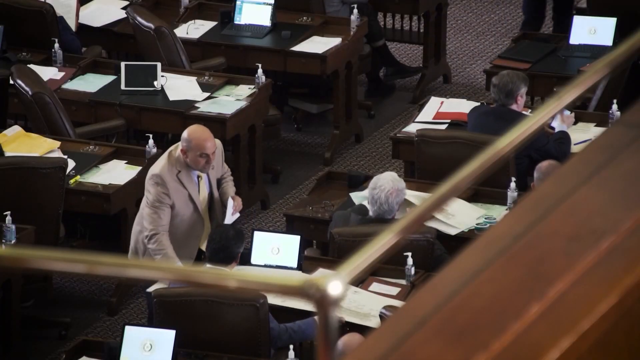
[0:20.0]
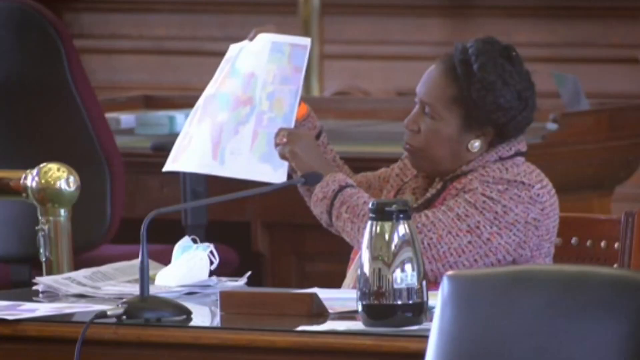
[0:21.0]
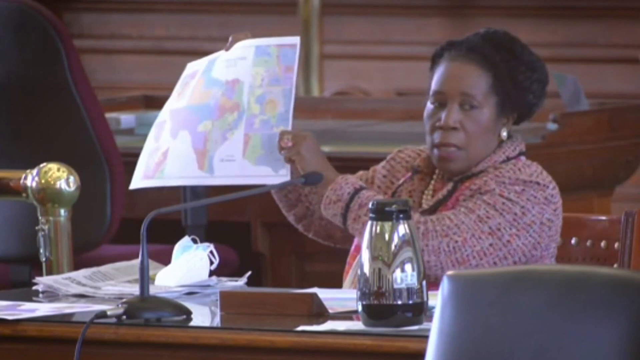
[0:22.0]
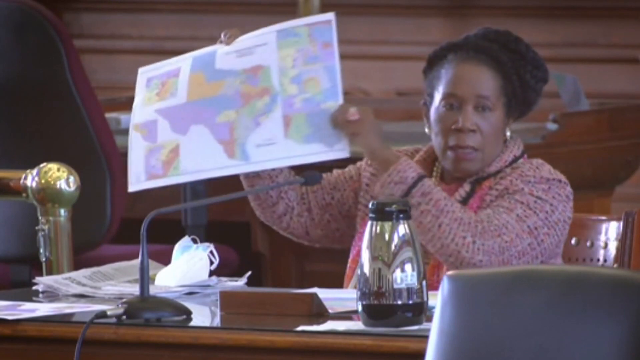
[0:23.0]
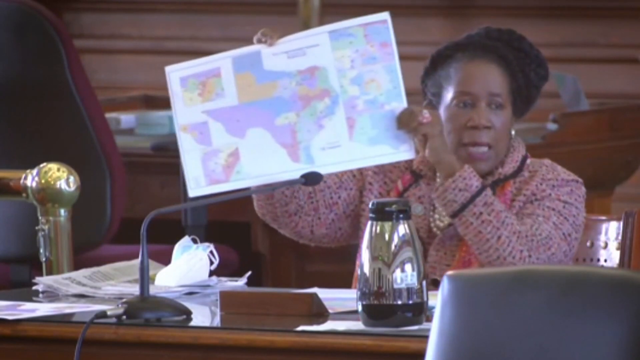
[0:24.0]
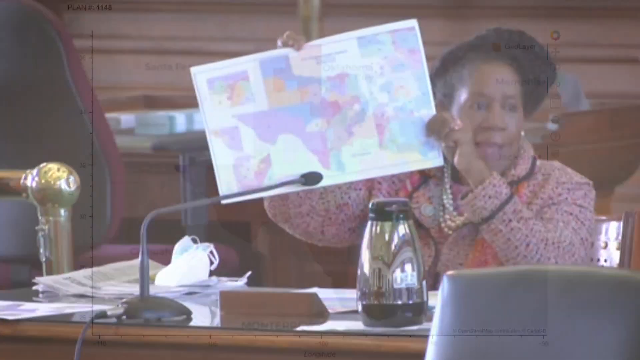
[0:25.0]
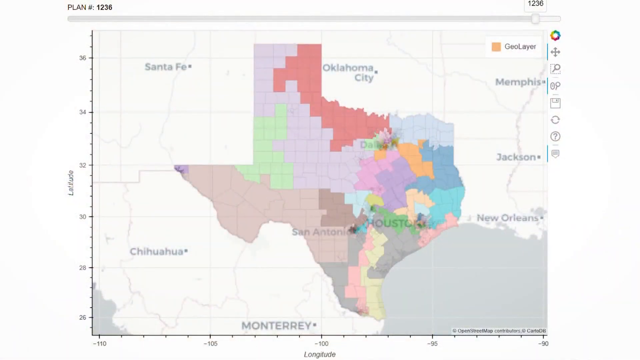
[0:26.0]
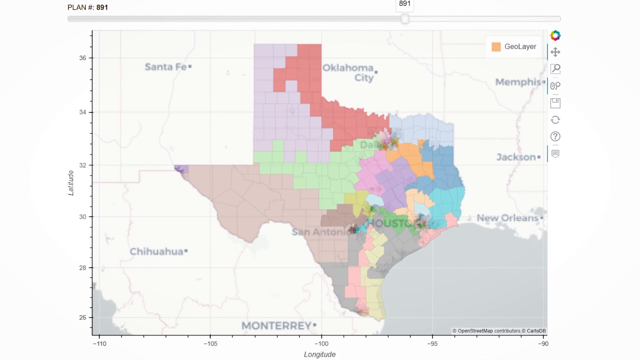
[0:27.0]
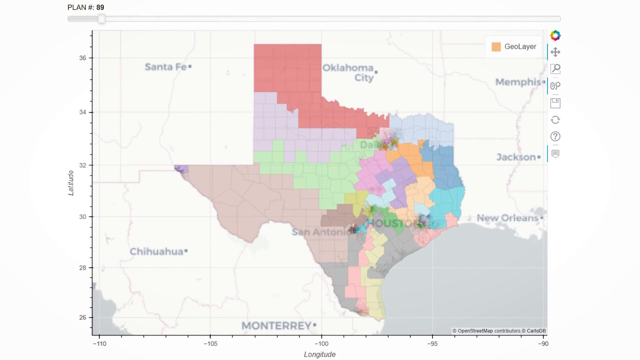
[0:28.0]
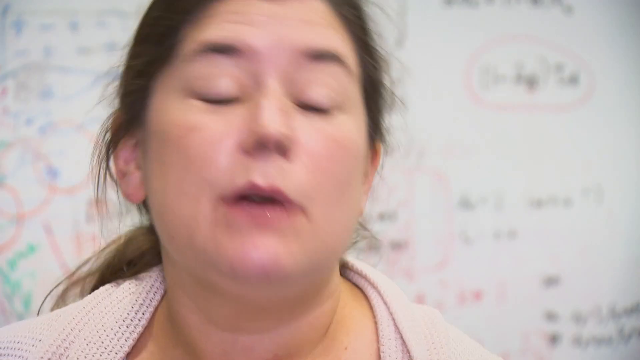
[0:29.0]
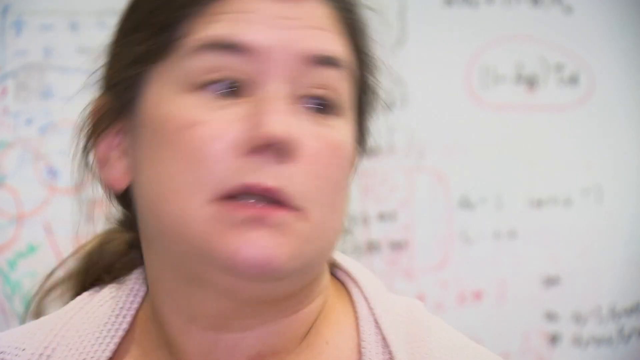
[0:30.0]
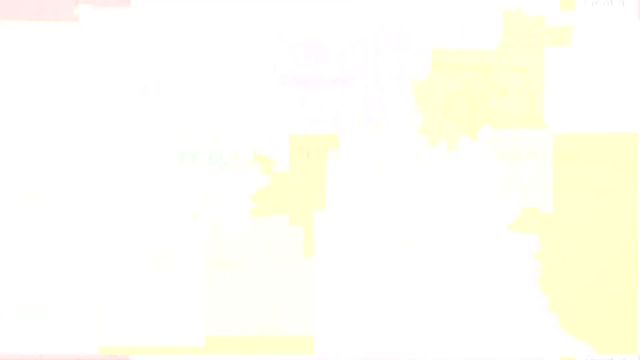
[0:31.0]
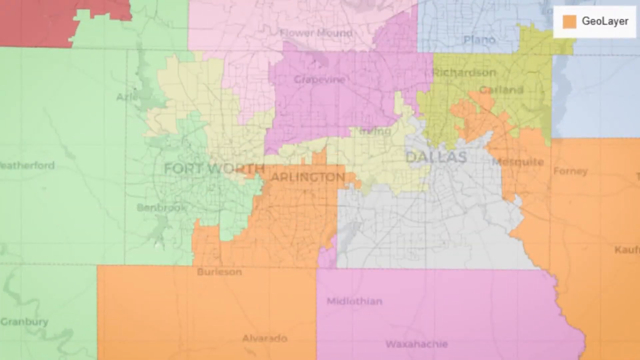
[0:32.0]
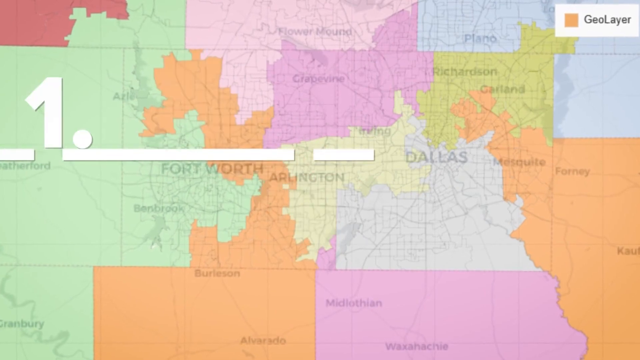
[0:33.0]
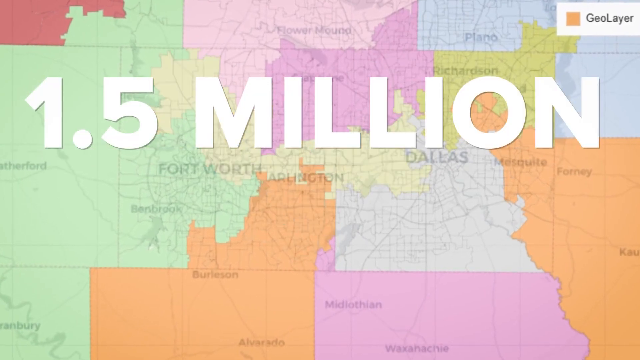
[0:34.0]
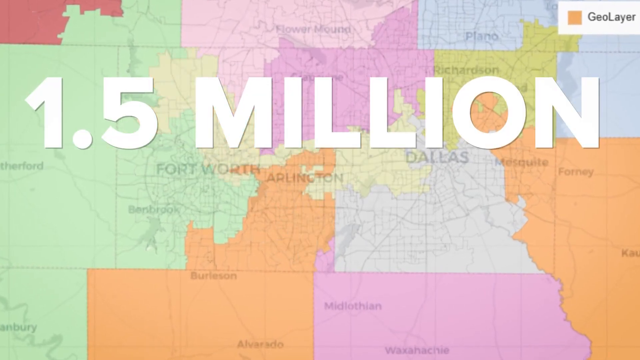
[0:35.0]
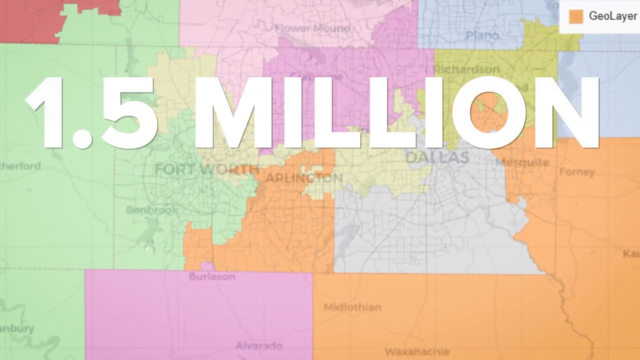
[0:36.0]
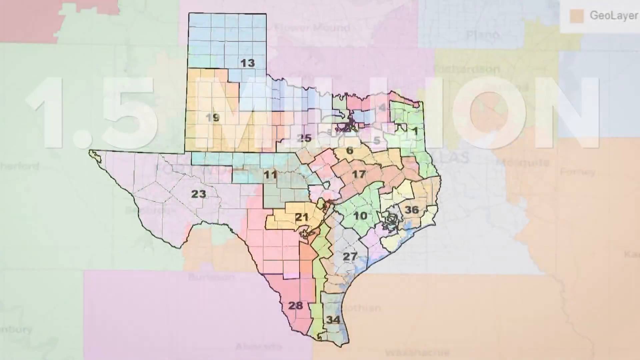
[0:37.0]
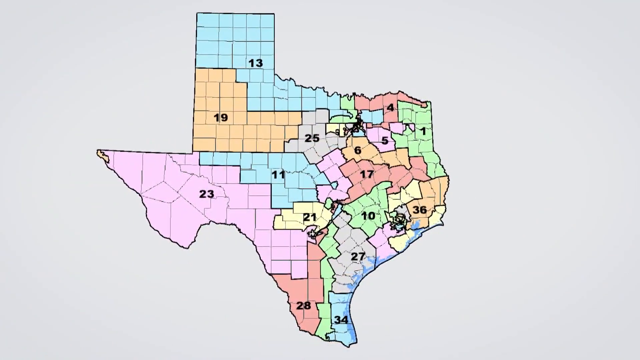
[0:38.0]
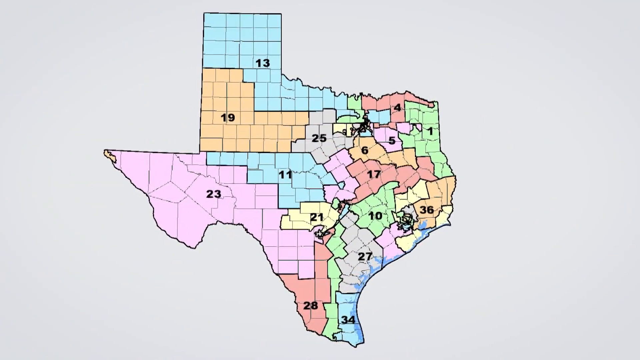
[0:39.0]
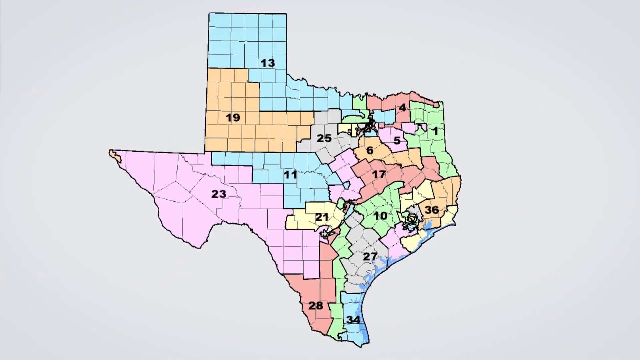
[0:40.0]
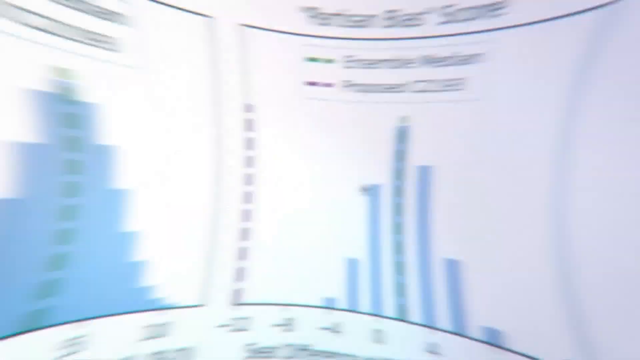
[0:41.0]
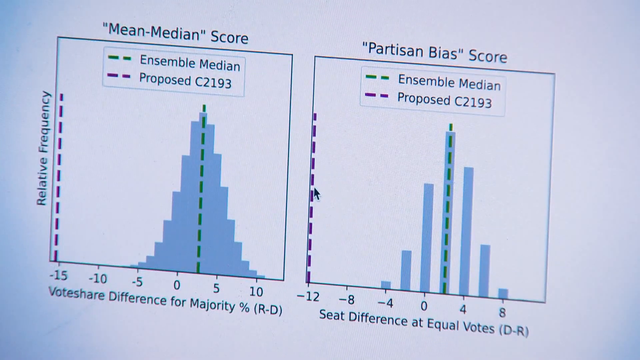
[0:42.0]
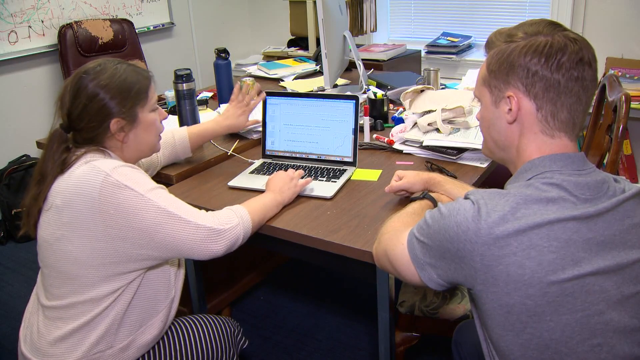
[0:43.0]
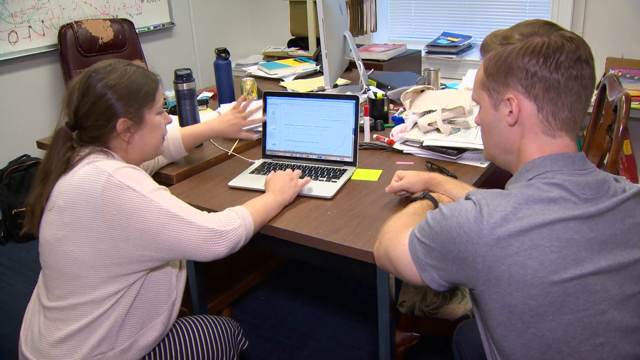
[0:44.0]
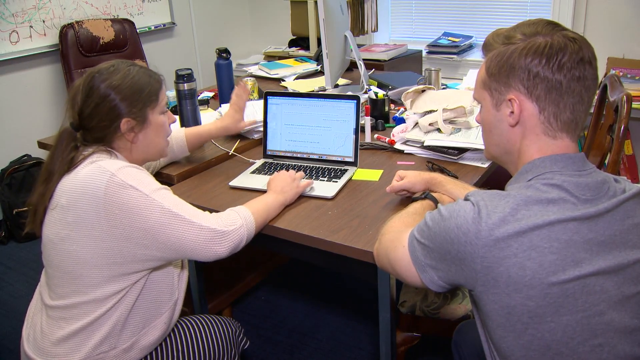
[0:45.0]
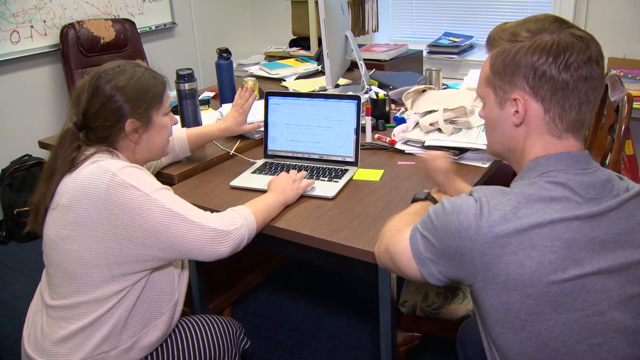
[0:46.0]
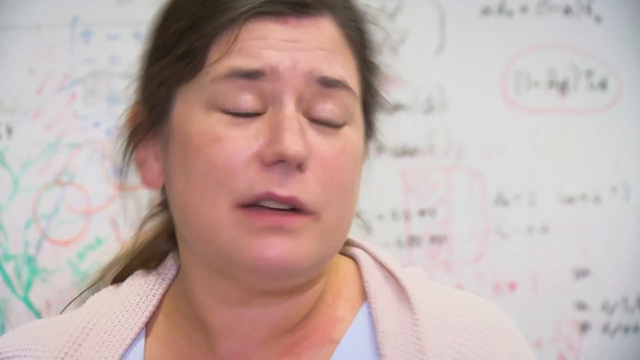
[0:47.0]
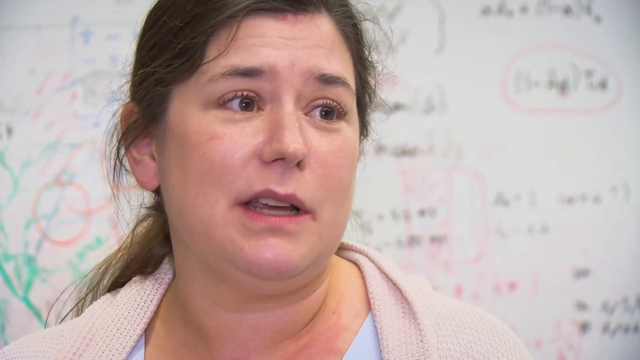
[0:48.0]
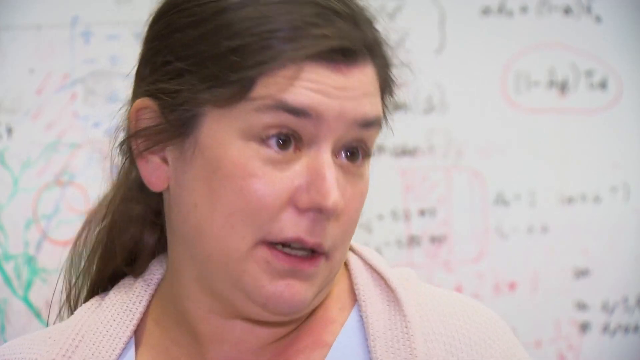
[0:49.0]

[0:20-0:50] Sheila Jackson Lee appears in the Texas House, holding up a map of Texas, some kind of large poster showing the map and other information. The video switches to another document showing a map of Texas with color-coded areas, then returns to the teacher talking in the classroom. Another map of Texas shows the breakdown of seats each area produces. The teacher appears again, now sitting at a desk next to the reporter and showing a computer, and then the video returns to the teacher once more. The news segment about Texas politics alternates between video footage, images of documents, and the interview with the teacher.